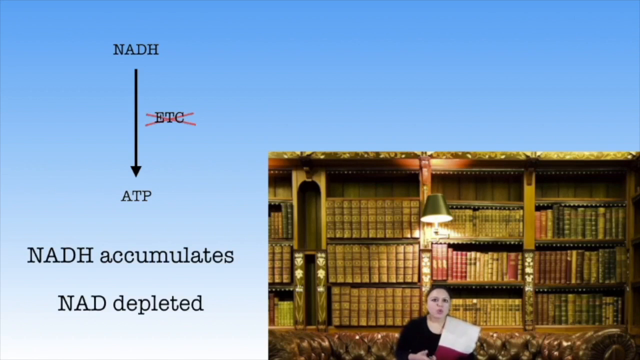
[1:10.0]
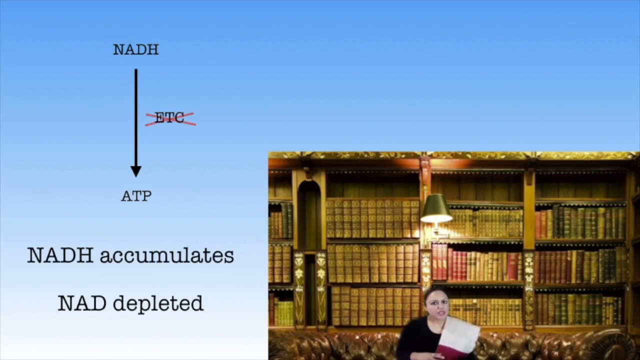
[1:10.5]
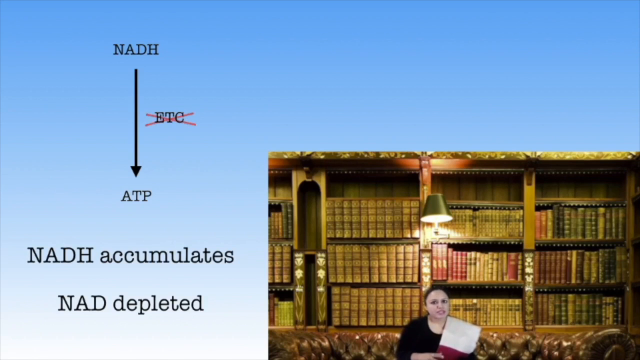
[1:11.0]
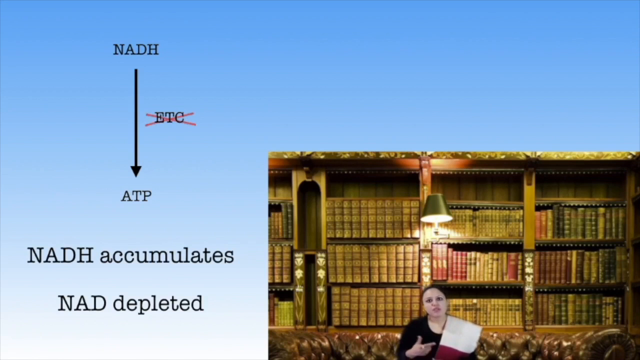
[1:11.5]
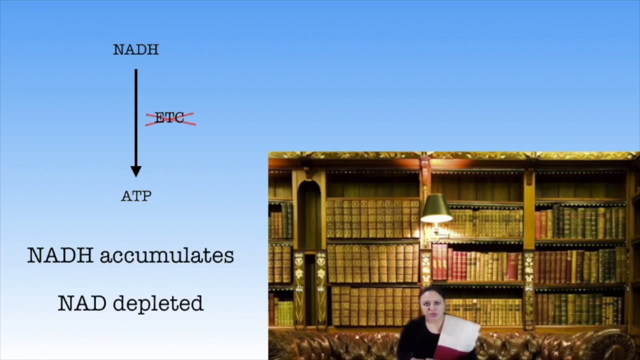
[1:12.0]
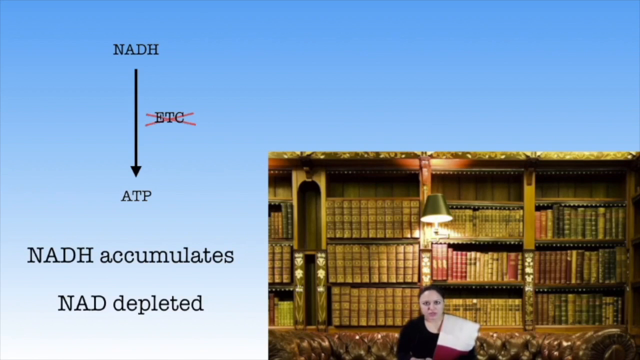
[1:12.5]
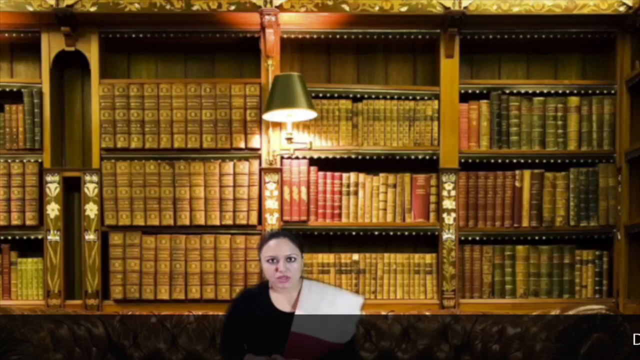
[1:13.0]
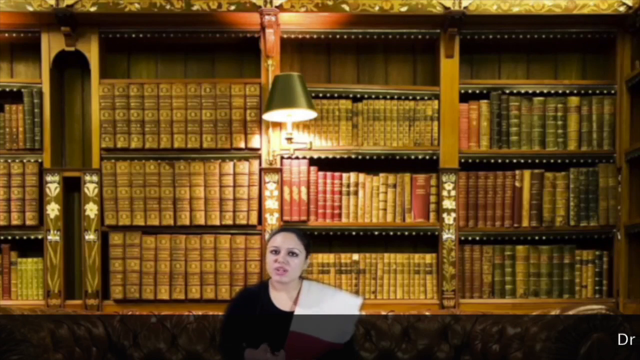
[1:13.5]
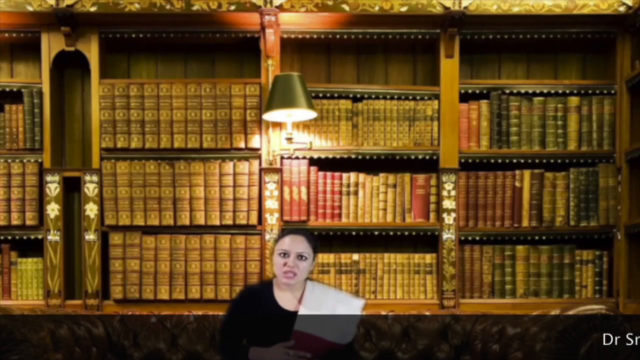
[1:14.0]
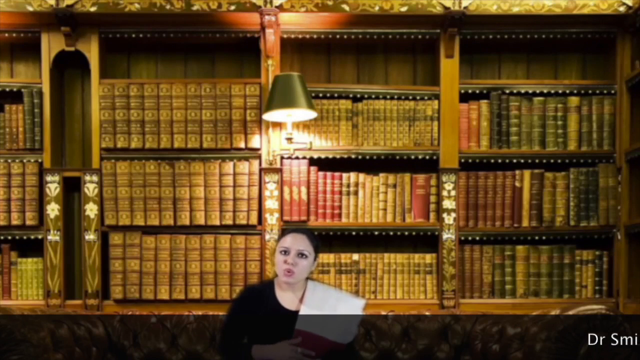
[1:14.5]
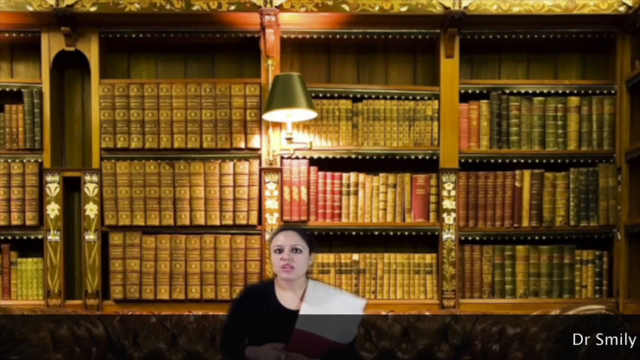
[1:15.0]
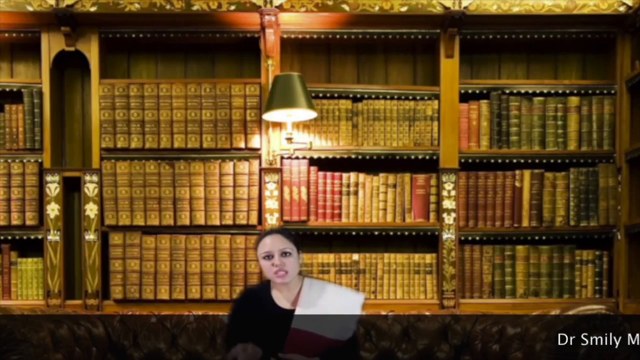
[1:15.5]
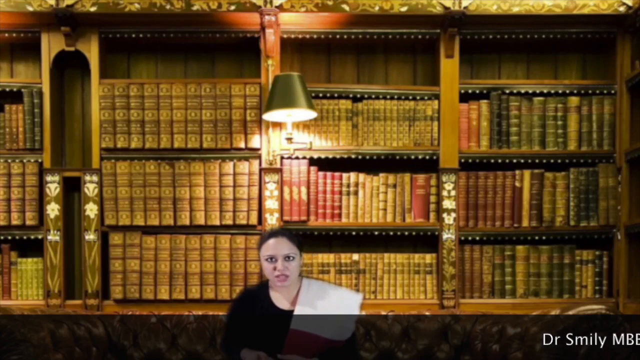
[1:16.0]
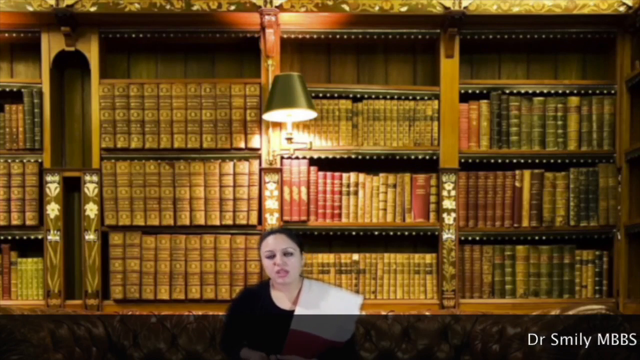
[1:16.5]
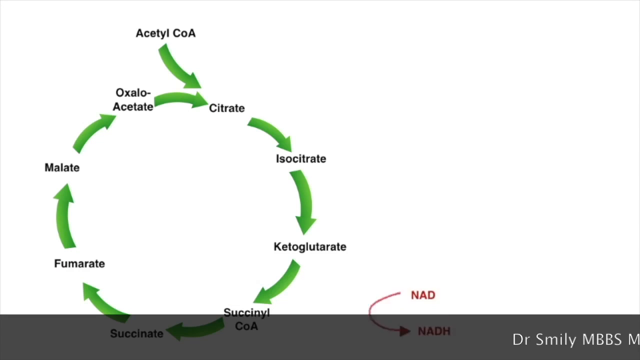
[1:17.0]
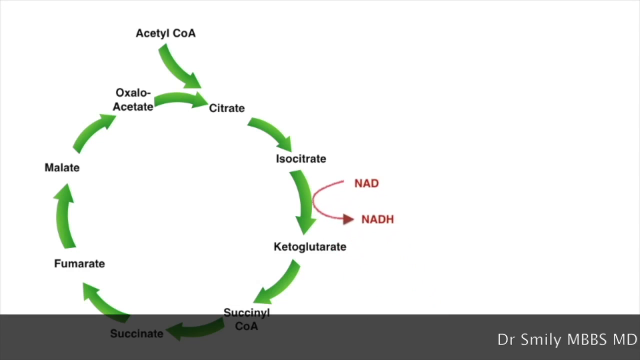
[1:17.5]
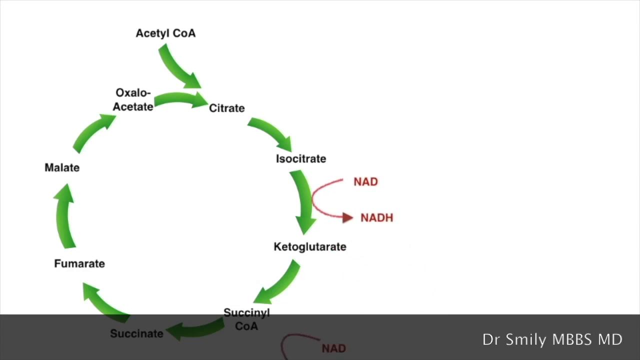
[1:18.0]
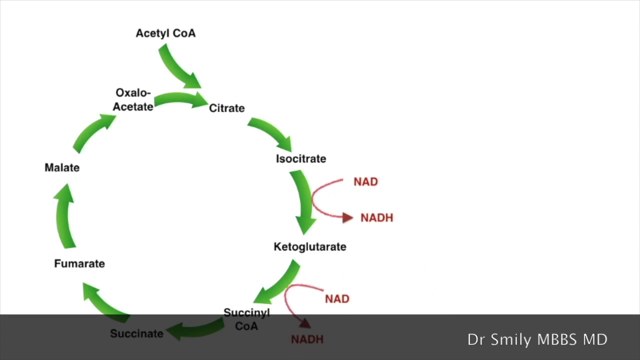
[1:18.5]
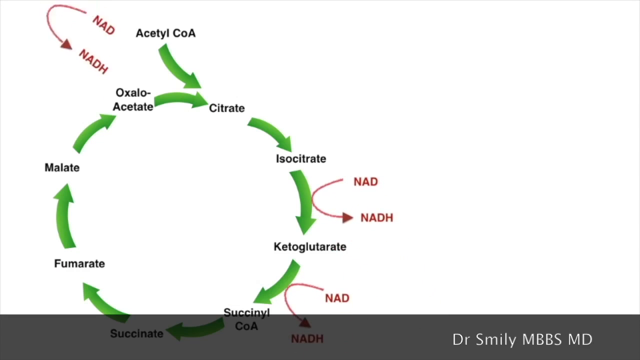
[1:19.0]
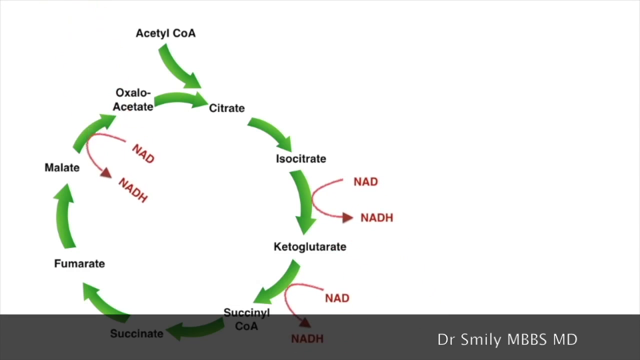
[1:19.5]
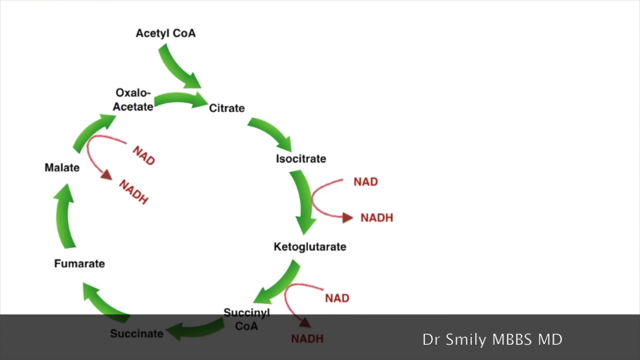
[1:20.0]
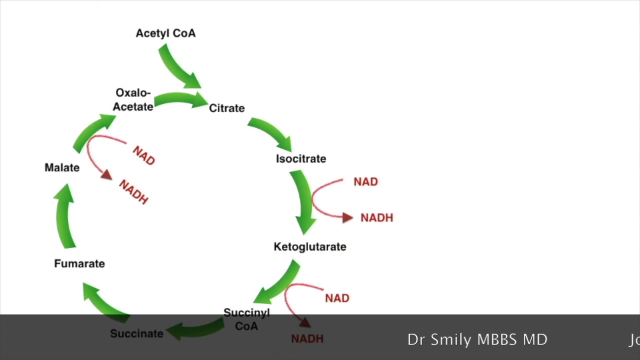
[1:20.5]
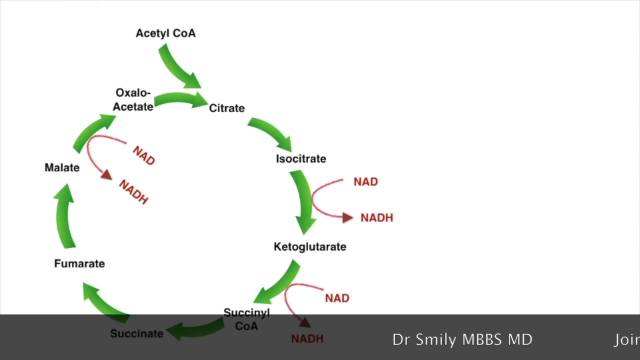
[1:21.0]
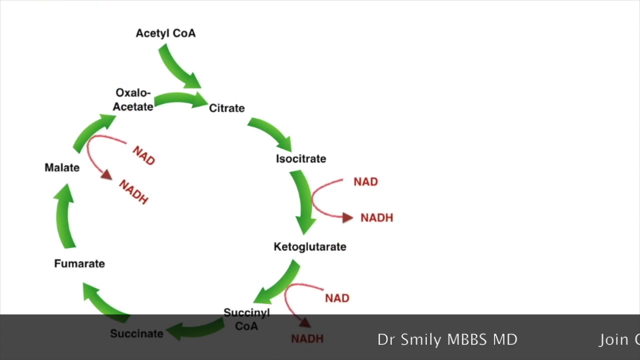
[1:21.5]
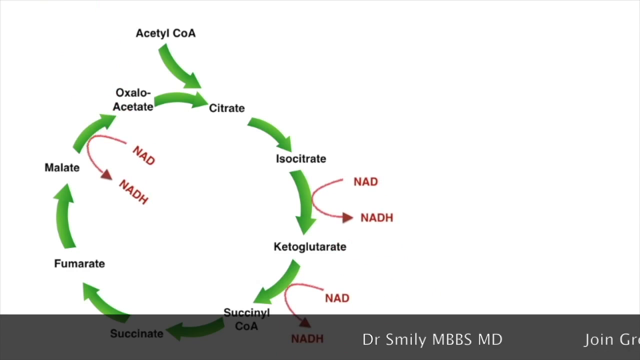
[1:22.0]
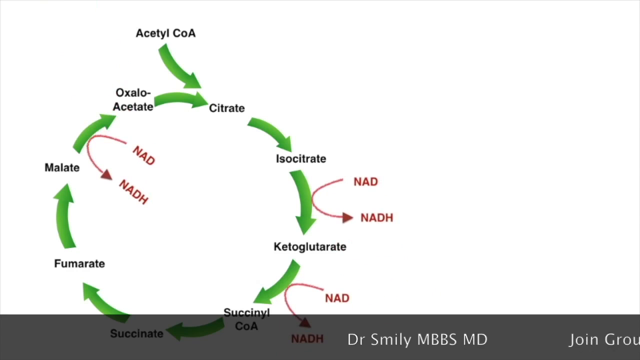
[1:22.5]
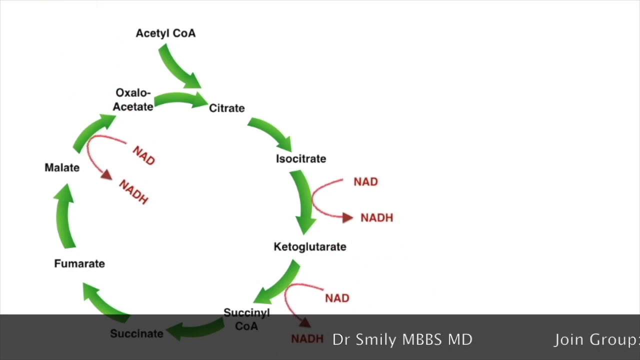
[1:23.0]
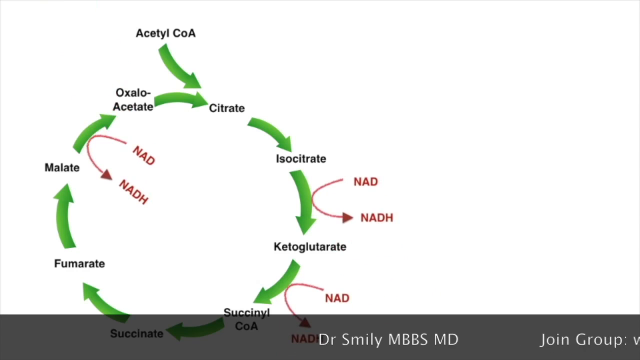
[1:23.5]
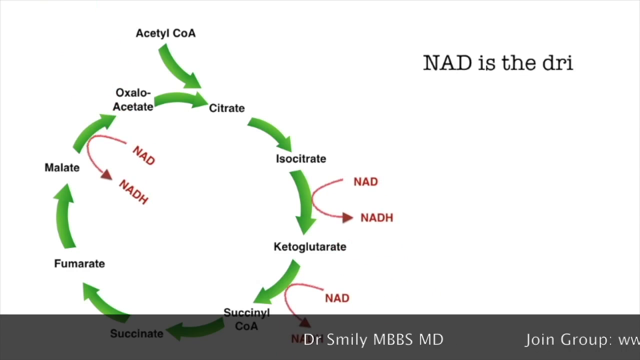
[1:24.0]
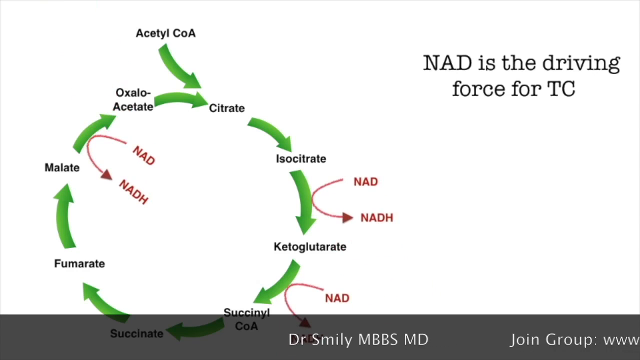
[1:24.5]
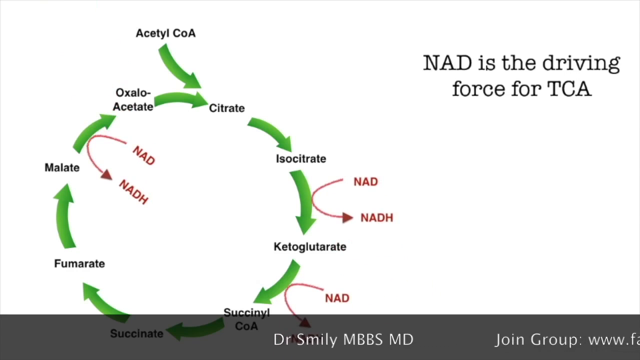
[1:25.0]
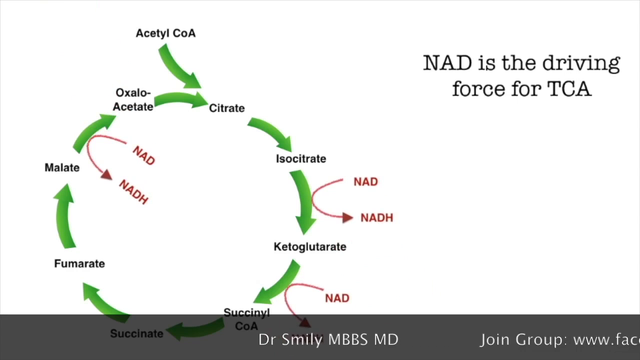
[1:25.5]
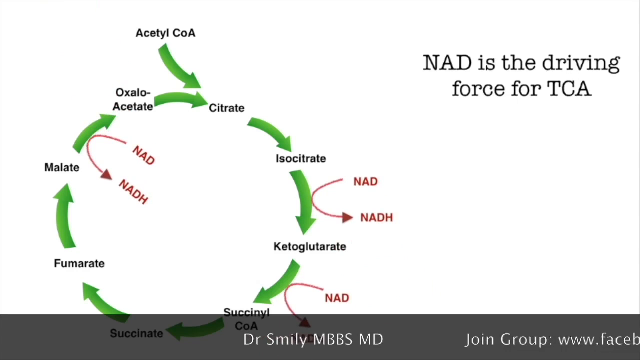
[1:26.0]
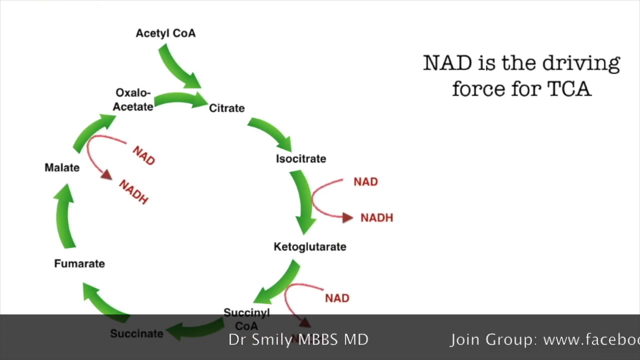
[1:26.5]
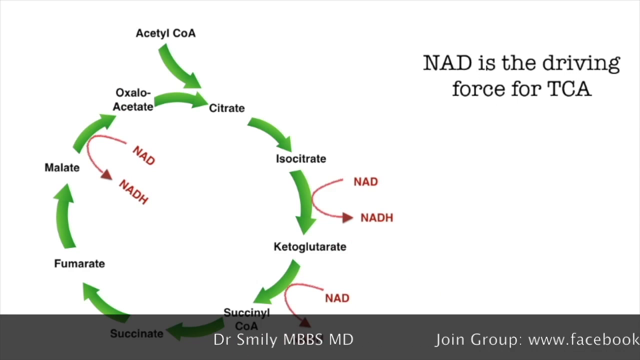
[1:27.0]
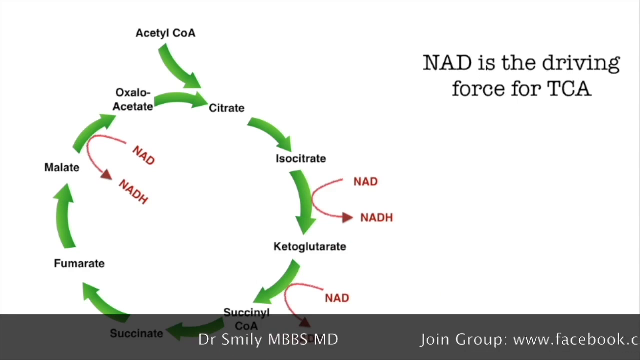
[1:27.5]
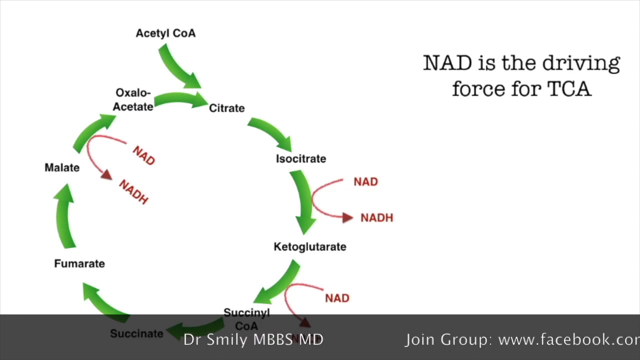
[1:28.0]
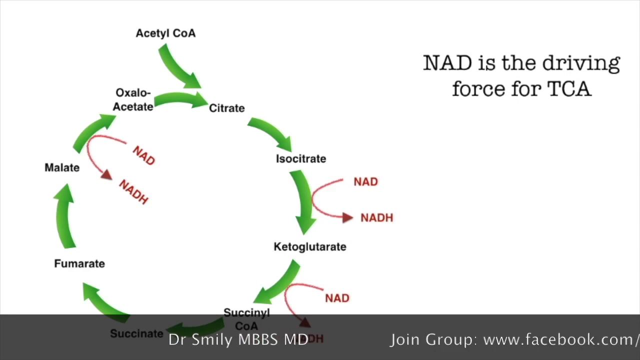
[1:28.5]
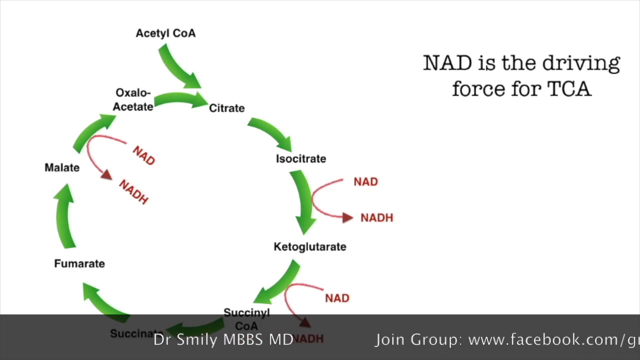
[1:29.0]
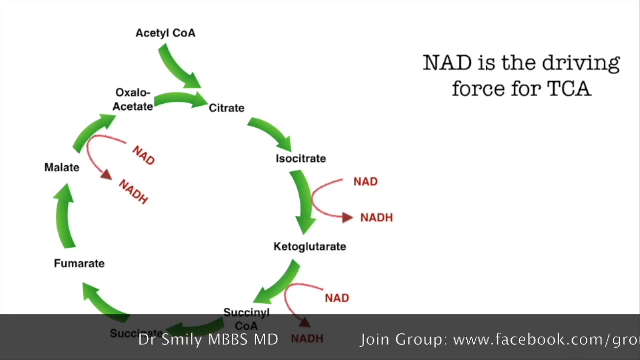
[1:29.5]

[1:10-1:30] An image of the doctor appears in the lower right-hand corner. She is sitting on the couch with a sash over her shoulder, talking, and behind her is a large bookshelf full of large books. Most of the books look oversized for the picture, suggesting it is a backdrop for editing. On the left side of the image is a diagram about NADH accumulating and NADH being depleted, including a small chart with an arrow going from NADH down to ATP. Then the doctor comes back, talking.